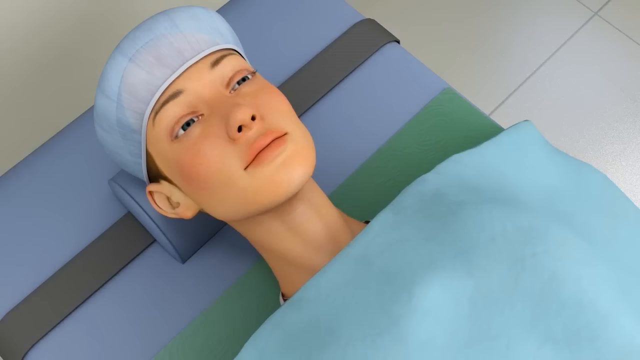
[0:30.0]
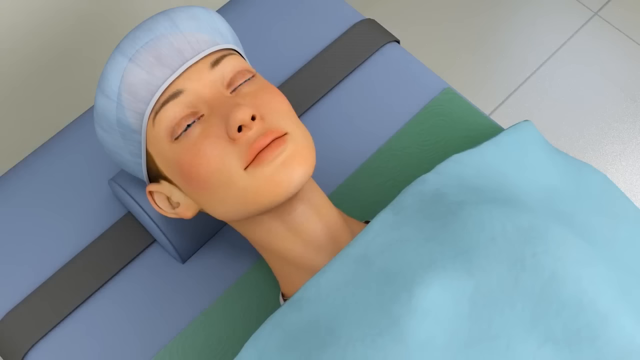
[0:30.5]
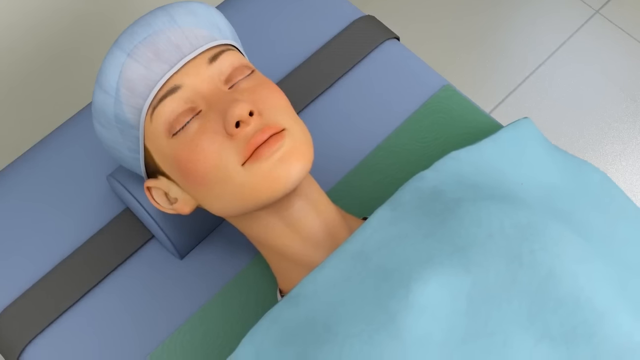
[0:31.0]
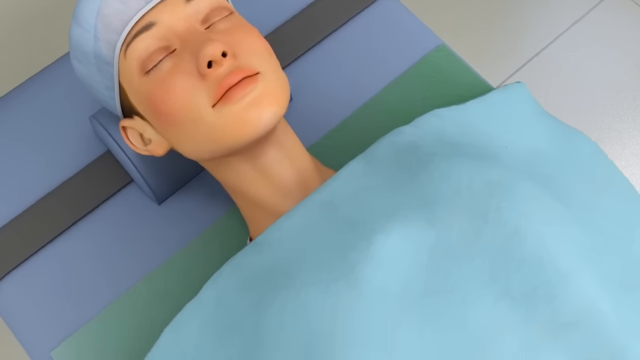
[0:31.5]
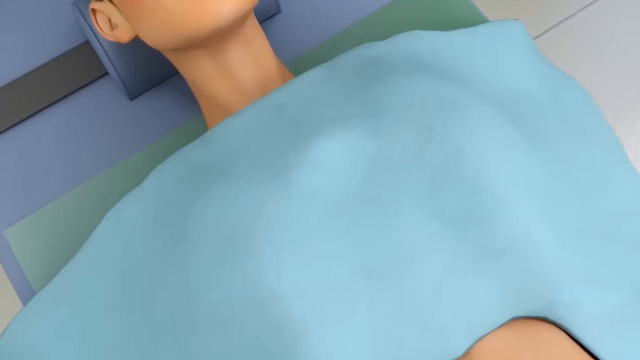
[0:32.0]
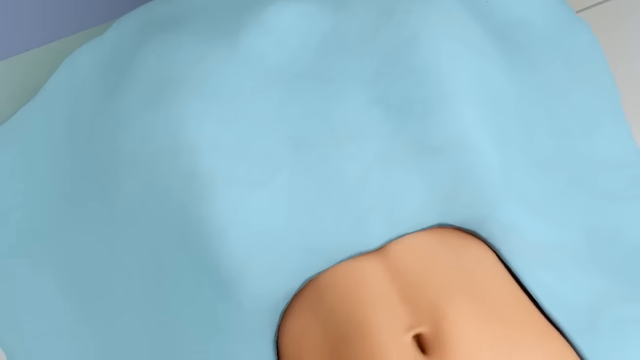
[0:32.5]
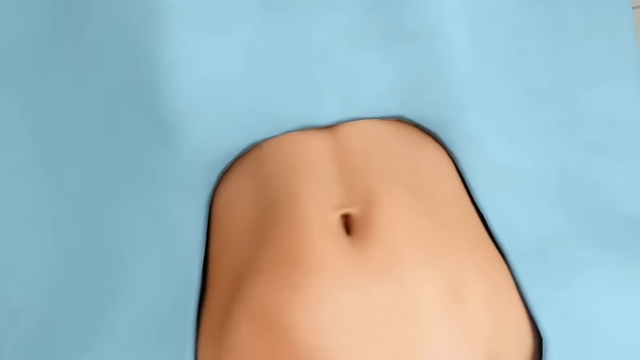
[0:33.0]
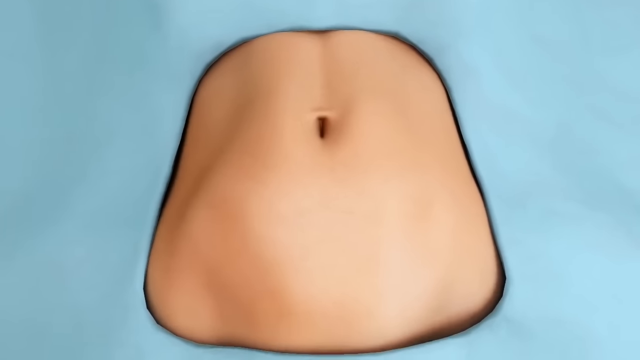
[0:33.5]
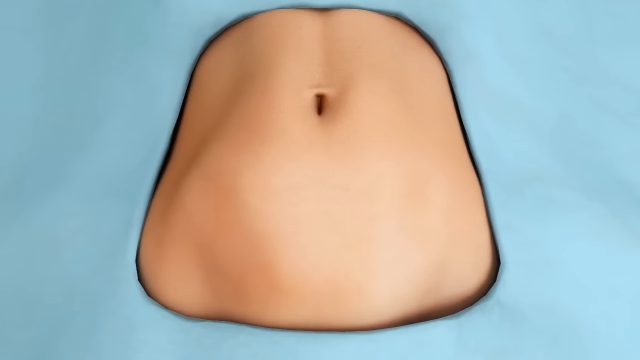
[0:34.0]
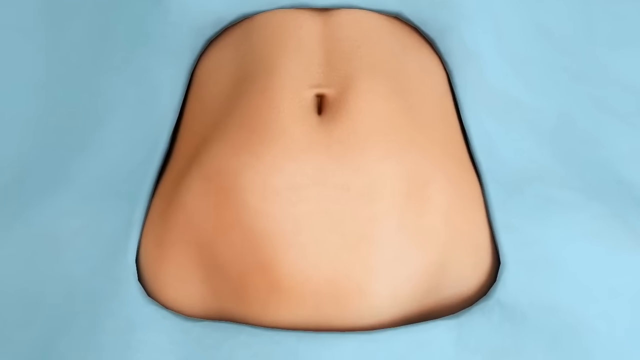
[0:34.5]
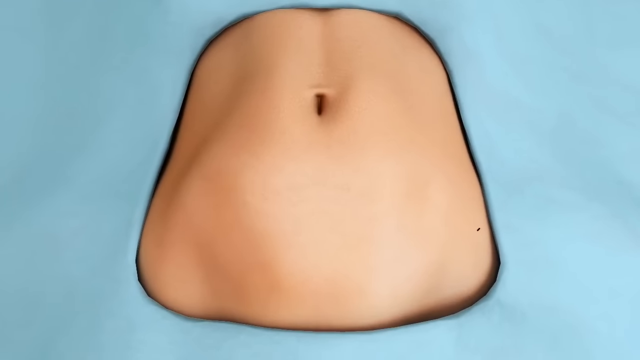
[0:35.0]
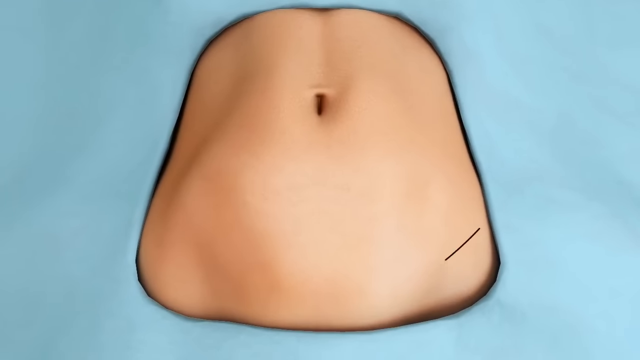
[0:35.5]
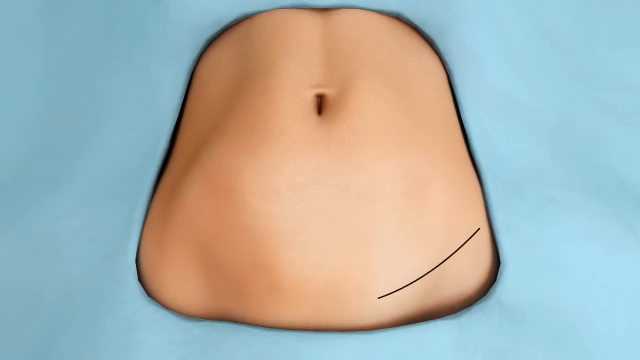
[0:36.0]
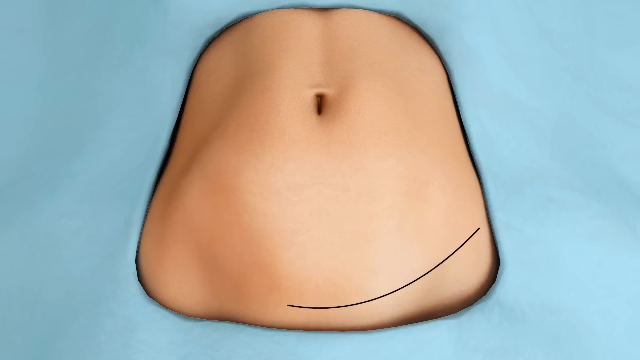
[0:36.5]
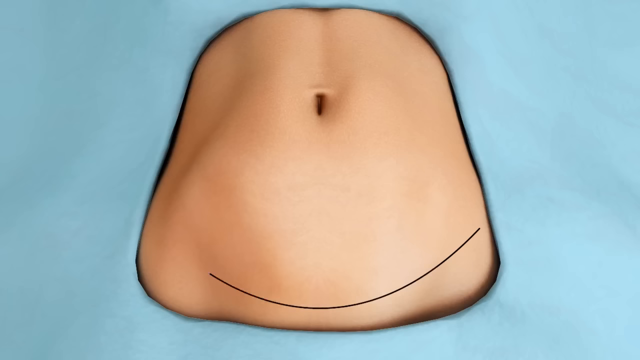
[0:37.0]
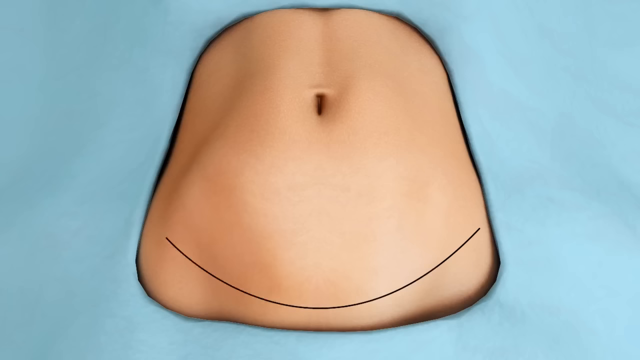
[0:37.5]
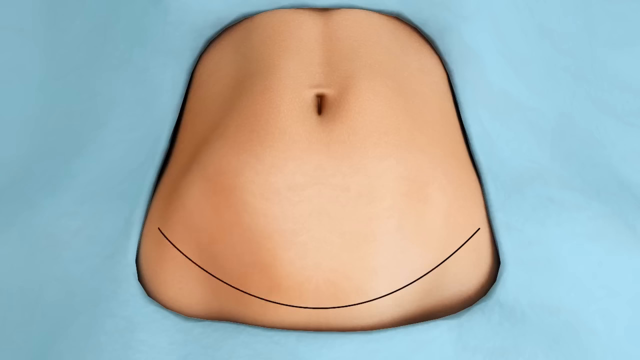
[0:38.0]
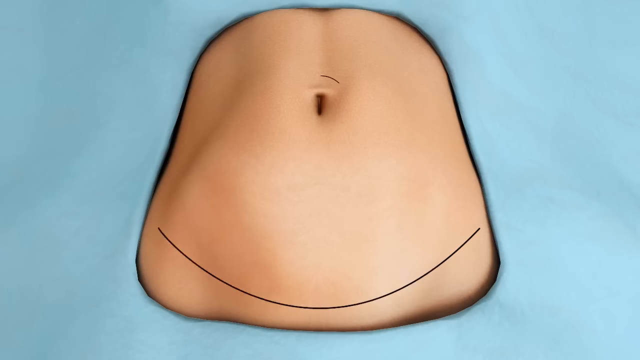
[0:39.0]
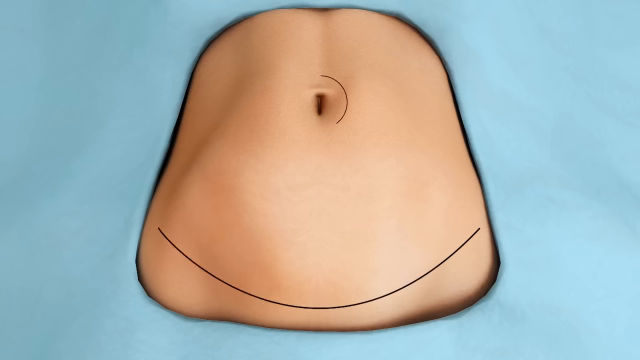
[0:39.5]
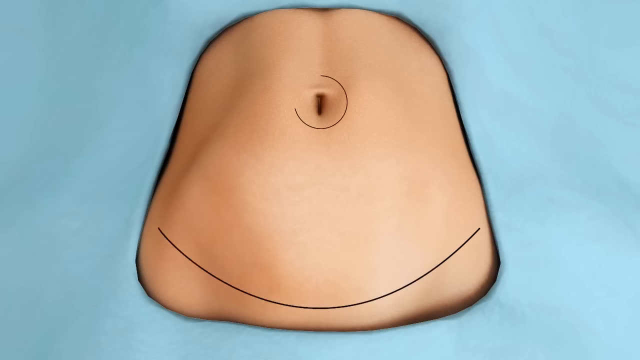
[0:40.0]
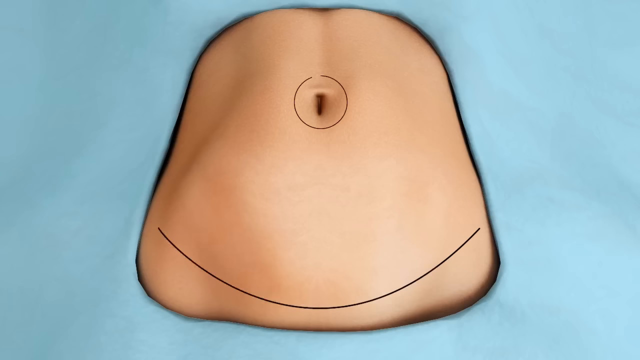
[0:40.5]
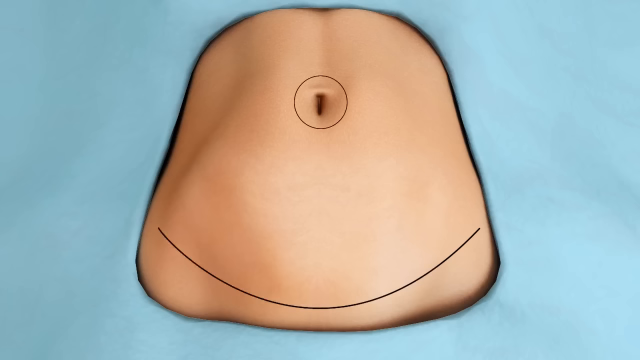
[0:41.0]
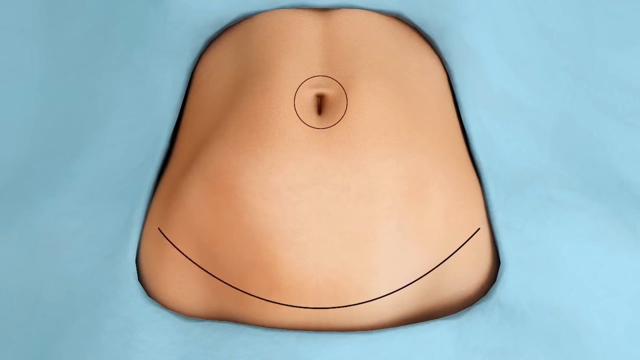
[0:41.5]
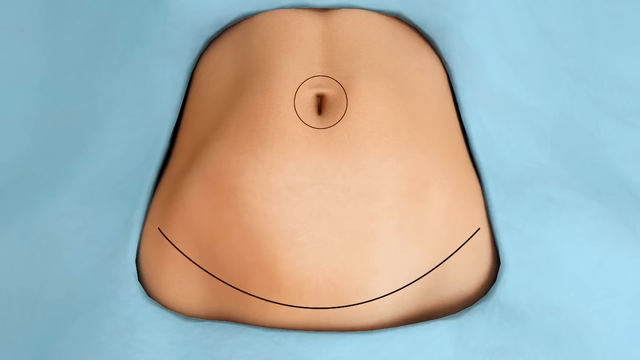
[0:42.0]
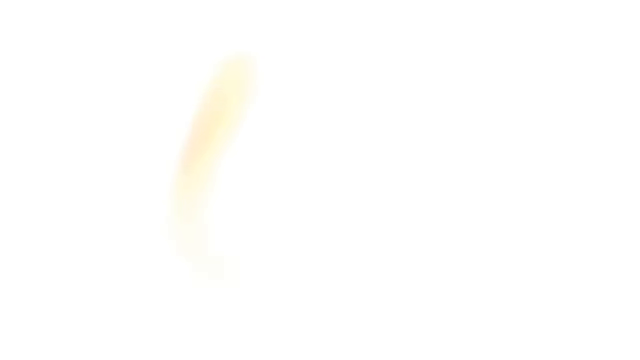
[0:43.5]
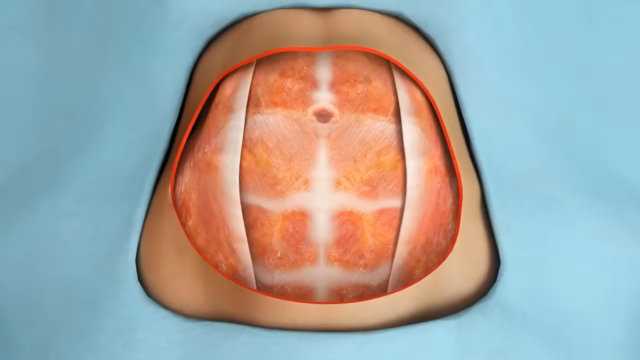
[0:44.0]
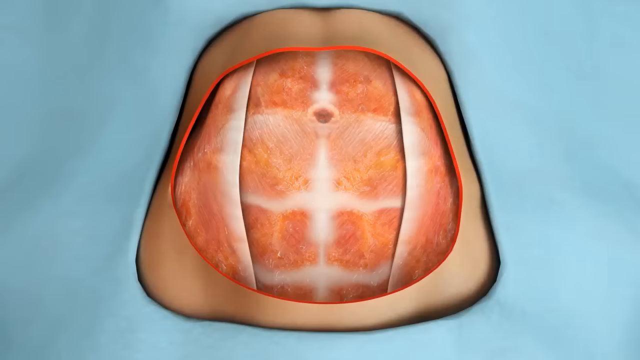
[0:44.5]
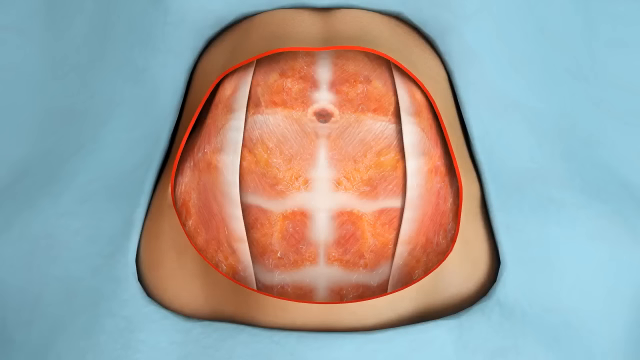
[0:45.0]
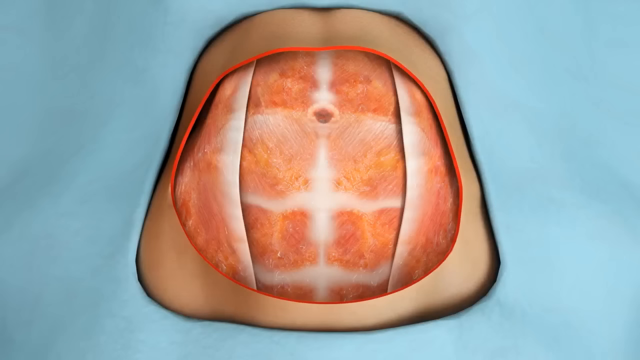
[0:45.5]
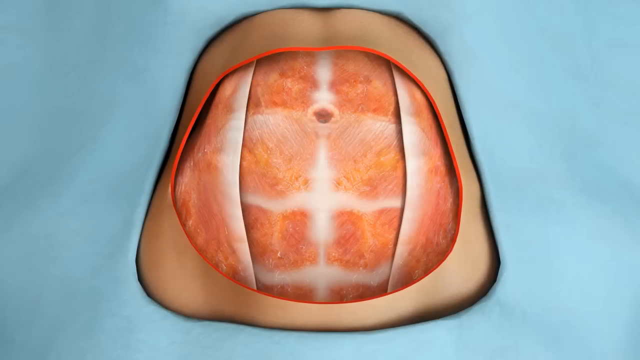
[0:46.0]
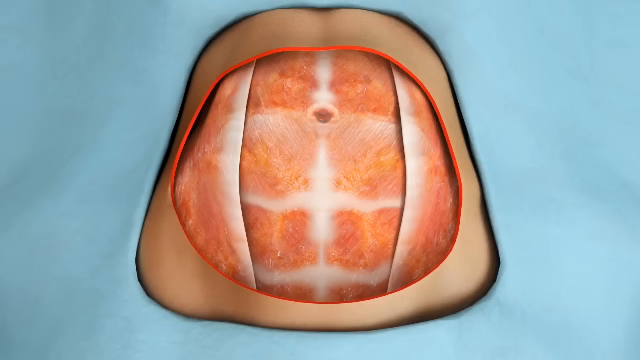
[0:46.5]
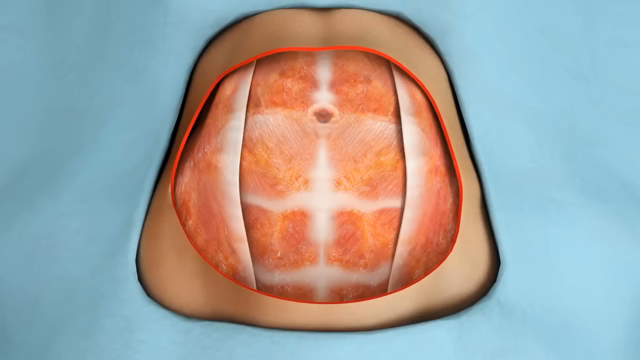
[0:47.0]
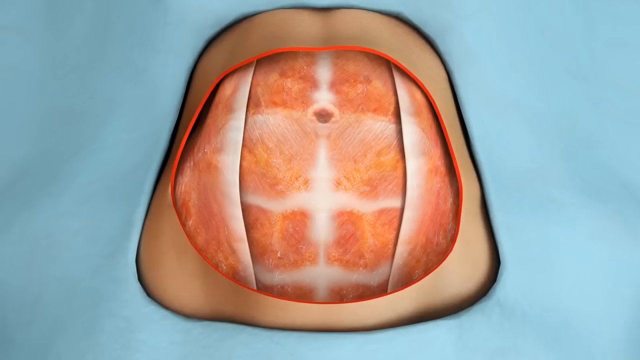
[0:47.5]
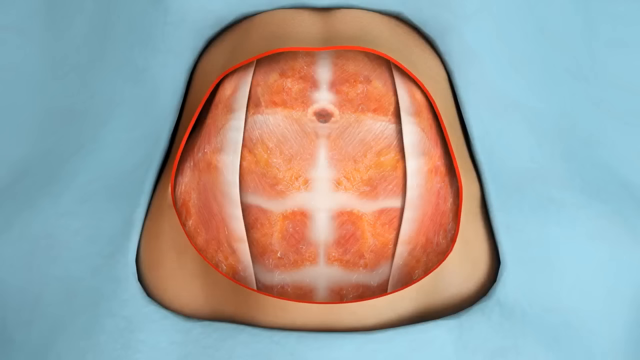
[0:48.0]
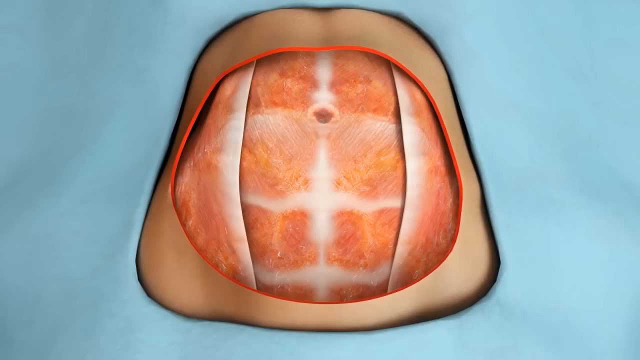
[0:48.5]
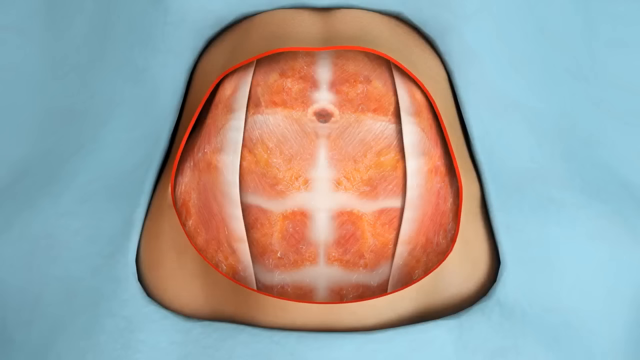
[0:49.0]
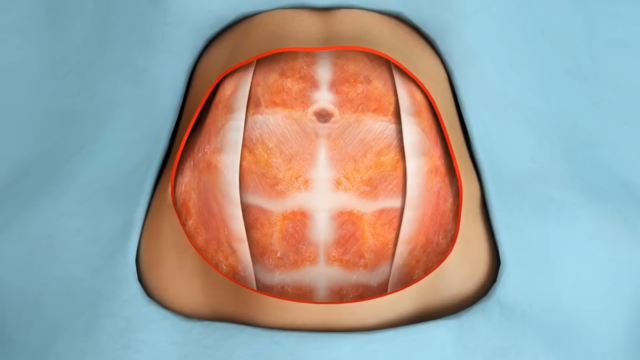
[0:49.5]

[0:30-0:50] The camera moves and zooms in on the woman's upper body, specifically her face. She is seen from above, looking up, with her eyes partially open; her eyes look dark blue, or maybe greyish blue. Below her is a floor of large white tiles and the surgical table. Under her head a grey strap runs across the table, and on top of the strap is a tiny blue pillow, half the size of her head, that she is lying on. She wears a blue surgical cap covering her brown hair, and a green piece of material runs from her neck down under her body. She closes her eyes as the camera moves down to reveal her tummy through the hole in the material. A black line is drawn in a rounded angle at the bottom of her tummy, and another black line is drawn in a circle around her belly button. The video cuts to a hole in her tummy revealing the muscle layers below the skin, circled with a red outline.